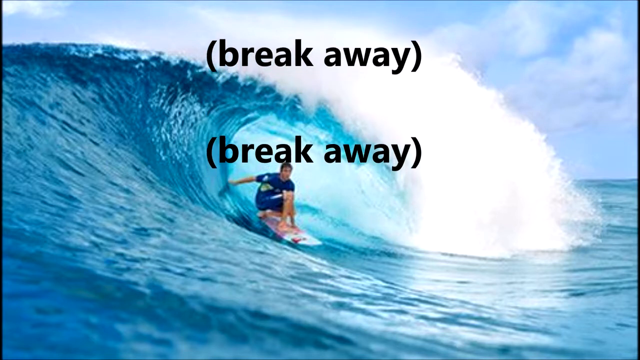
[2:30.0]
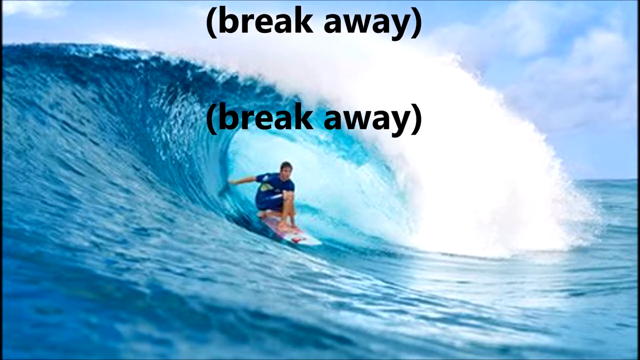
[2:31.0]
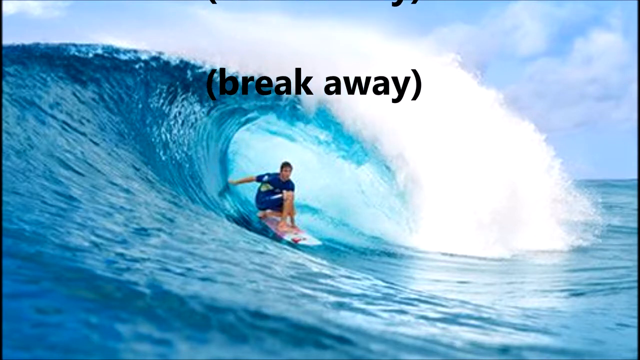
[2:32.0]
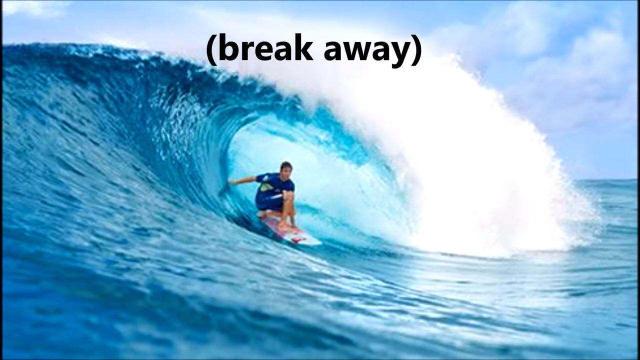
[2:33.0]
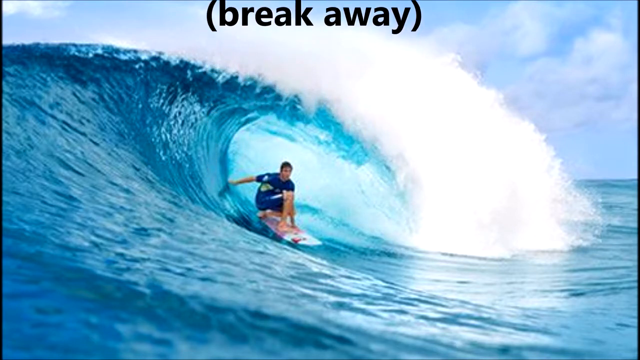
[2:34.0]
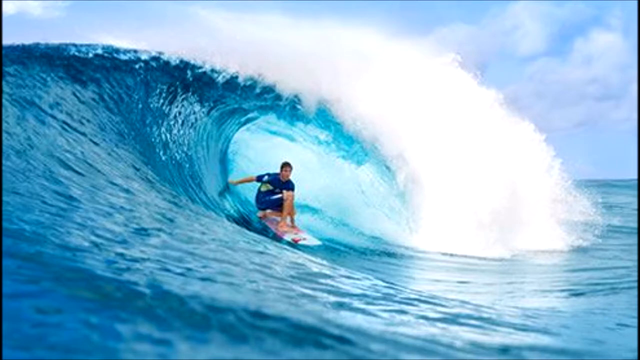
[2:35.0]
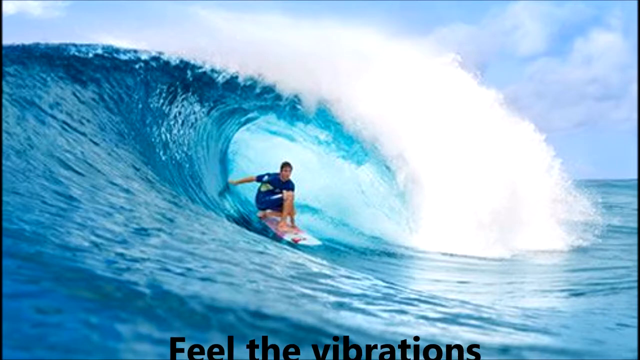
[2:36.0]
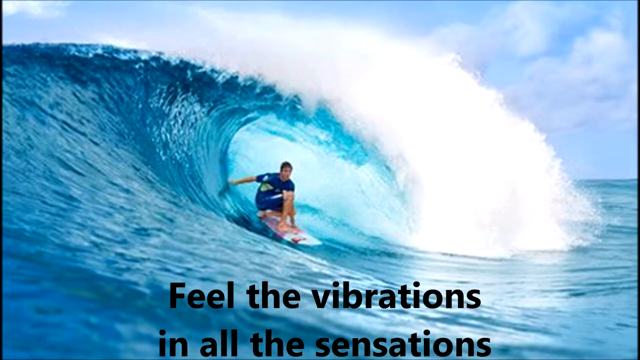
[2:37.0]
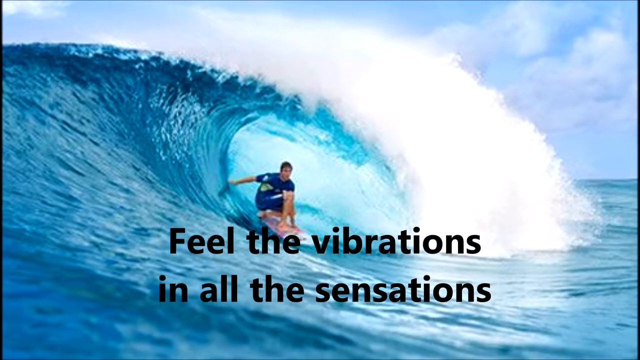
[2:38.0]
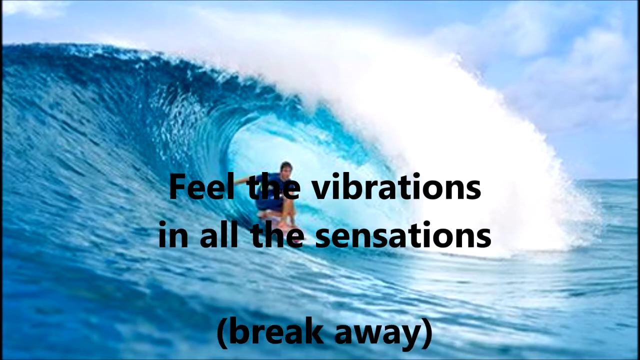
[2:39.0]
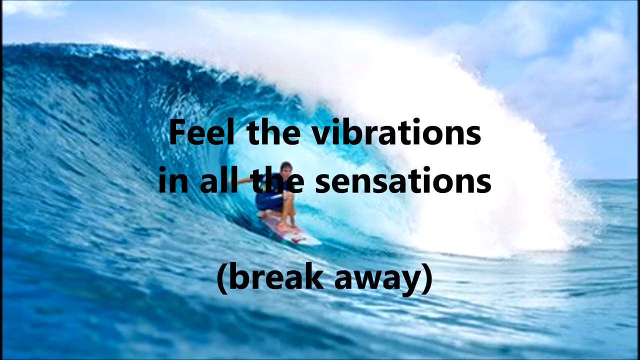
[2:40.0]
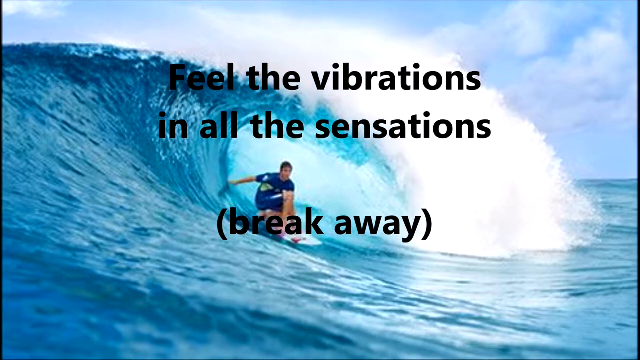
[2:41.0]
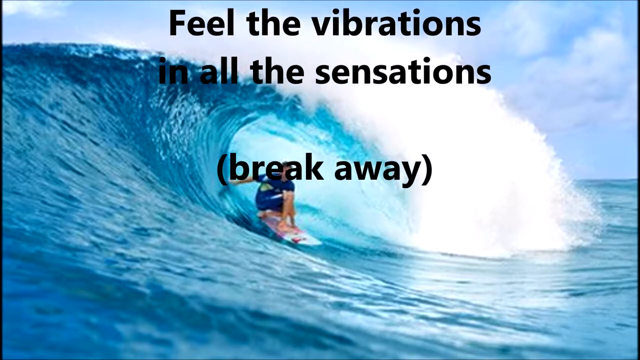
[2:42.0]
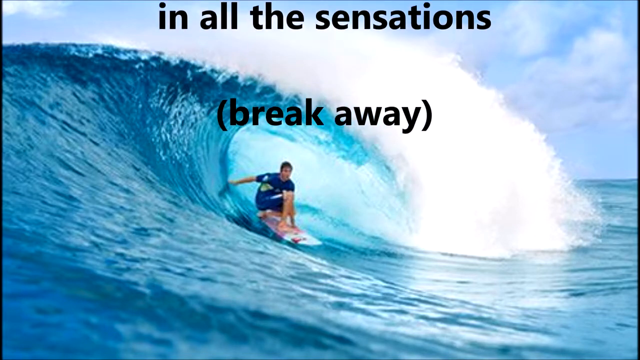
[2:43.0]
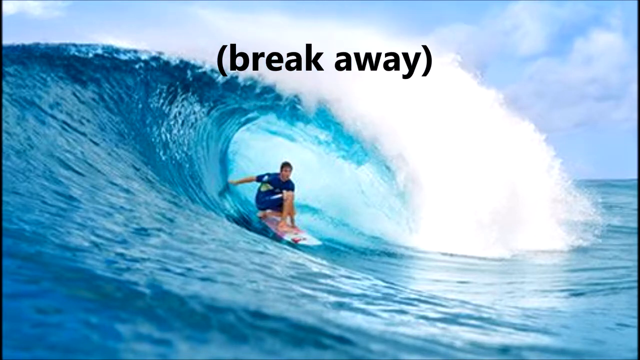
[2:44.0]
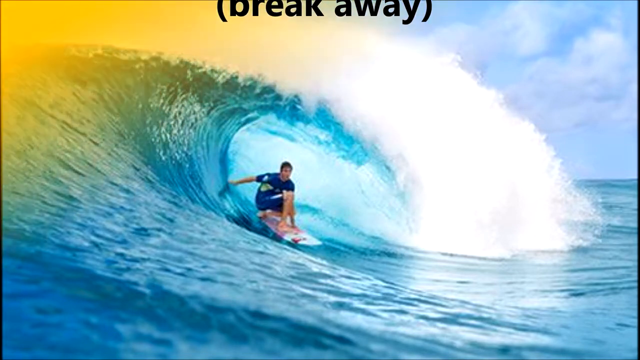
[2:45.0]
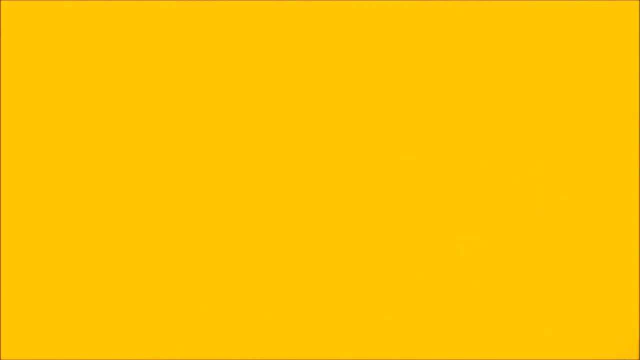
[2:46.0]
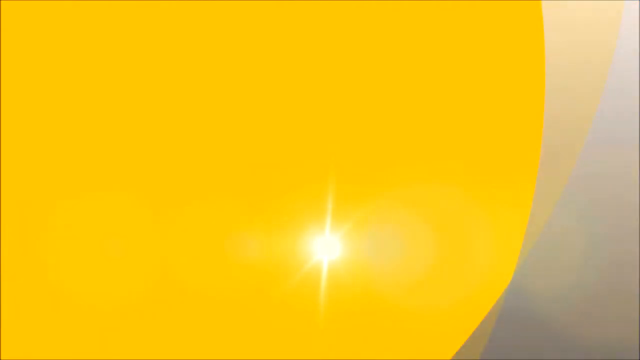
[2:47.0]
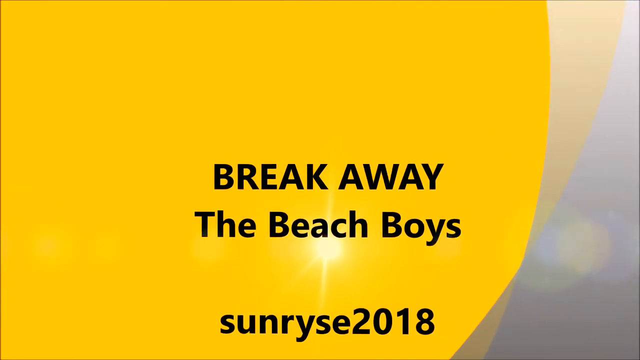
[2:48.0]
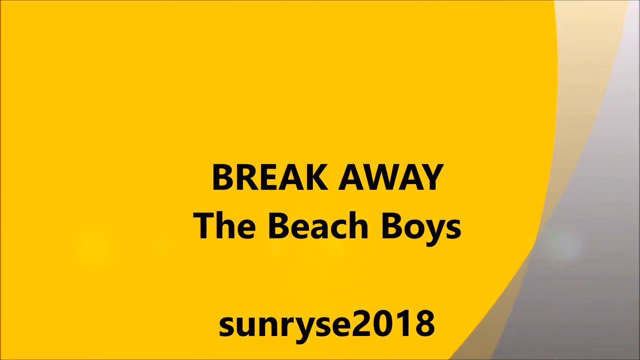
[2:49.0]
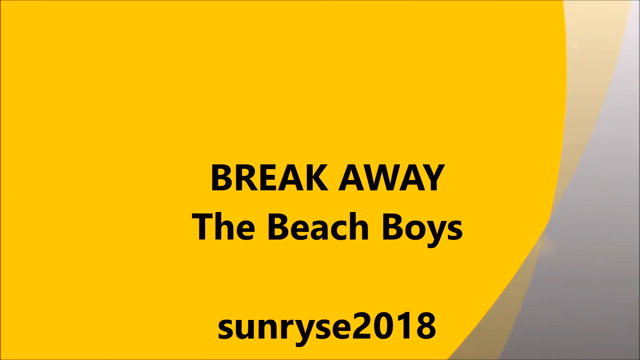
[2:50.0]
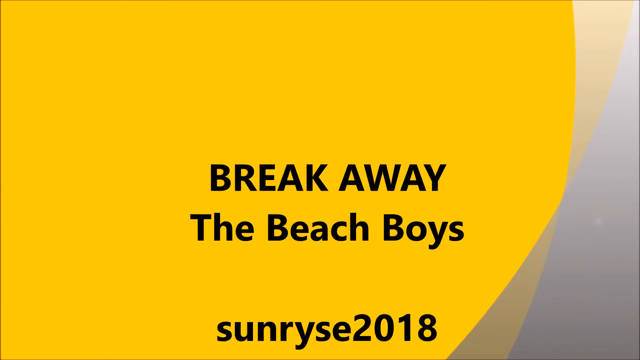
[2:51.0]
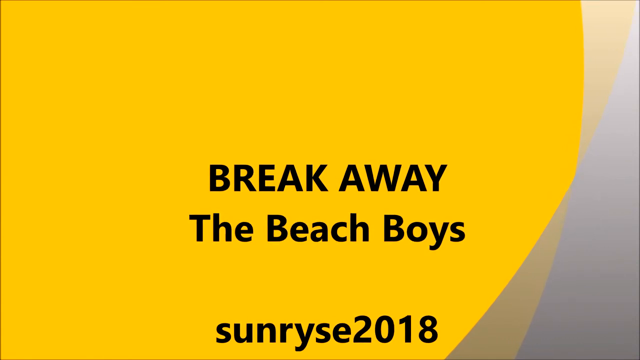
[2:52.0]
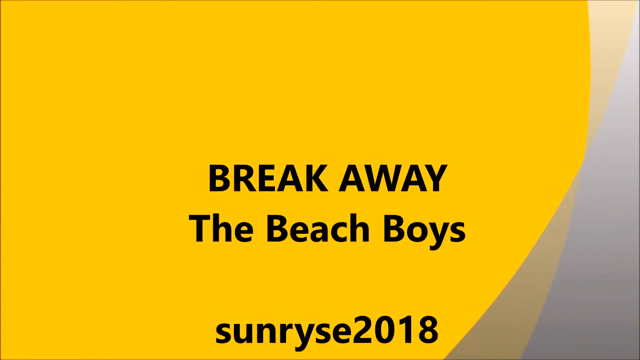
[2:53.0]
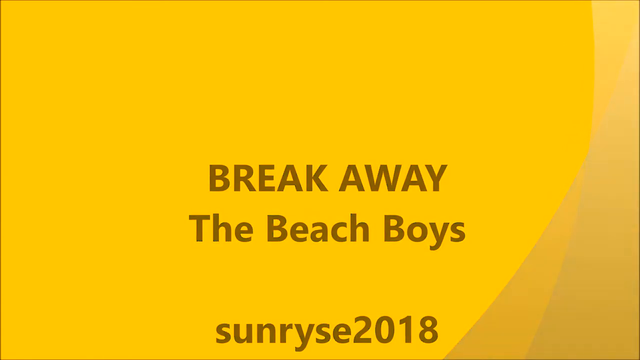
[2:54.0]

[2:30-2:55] The repeated "break away" lines move off the top of the screen, leaving a big space. The next line reads "feel the vibrations and all the sensations," followed by "break away" in parentheses. After another long space, the yellow background from the beginning takes over the whole screen. Text in the center of the screen, slightly lower, reads "Breakaway, The Beach Boys," and at the bottom of the screen it reads "Sunryse2018." This screen is similar to the first one, except the yellow part overtakes the gray, which is a smaller sliver on the right side of the screen. The boundaries of the yellow part move, pushing out toward the right before filling the screen completely. The yellow contrasts strongly with the blue background used behind the lyrics.